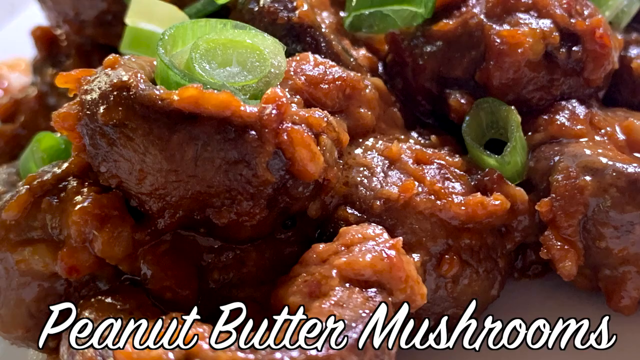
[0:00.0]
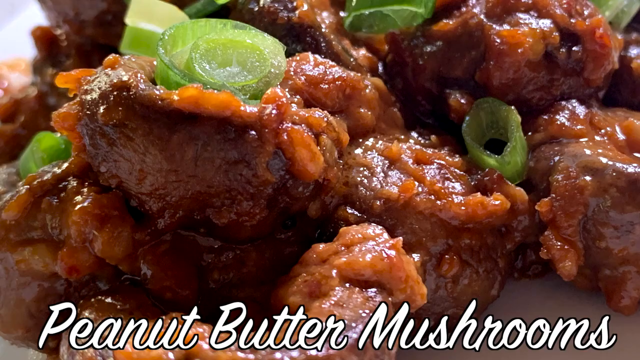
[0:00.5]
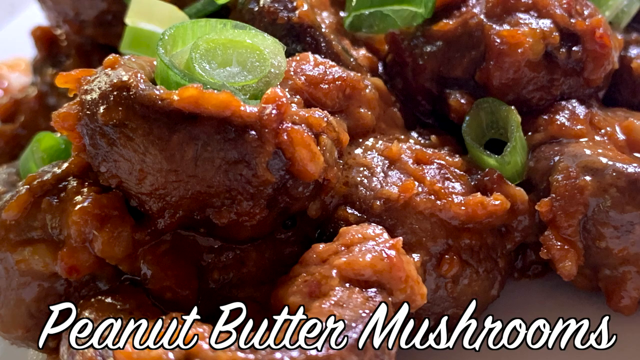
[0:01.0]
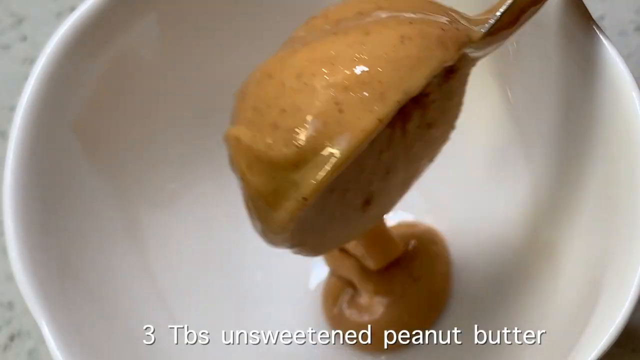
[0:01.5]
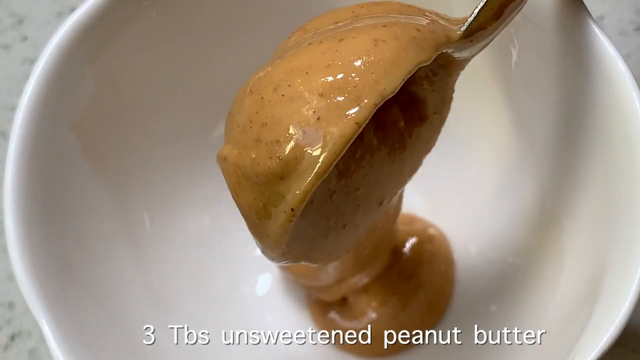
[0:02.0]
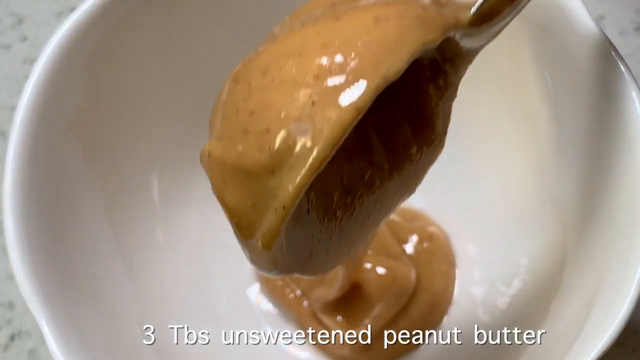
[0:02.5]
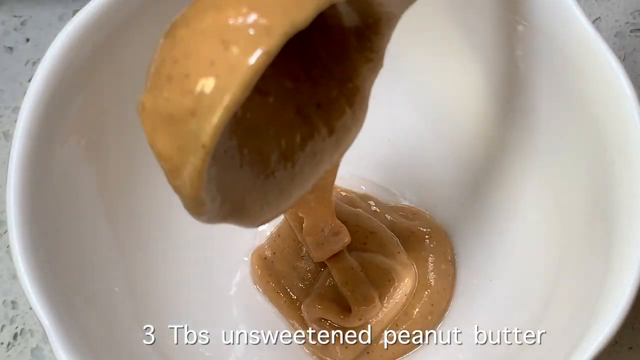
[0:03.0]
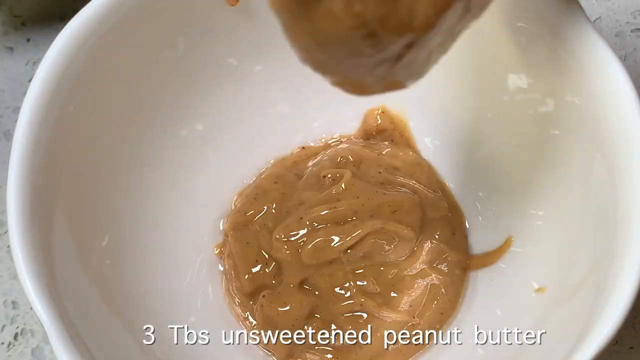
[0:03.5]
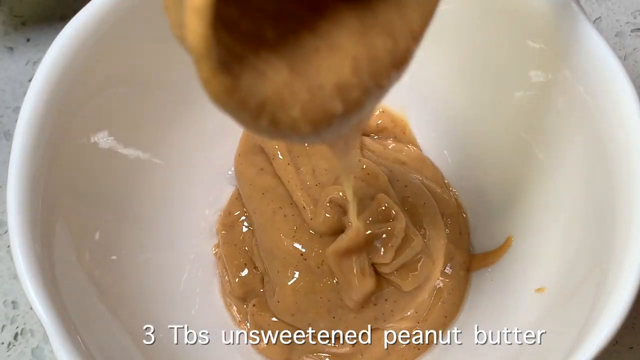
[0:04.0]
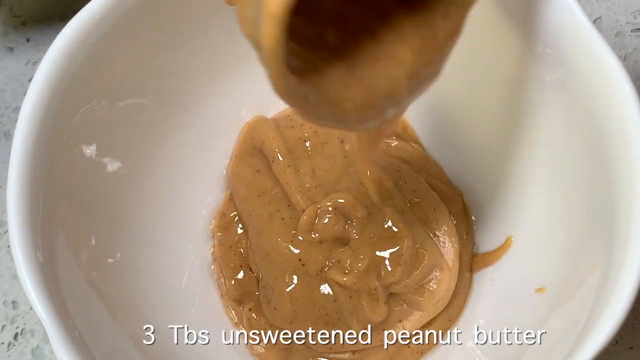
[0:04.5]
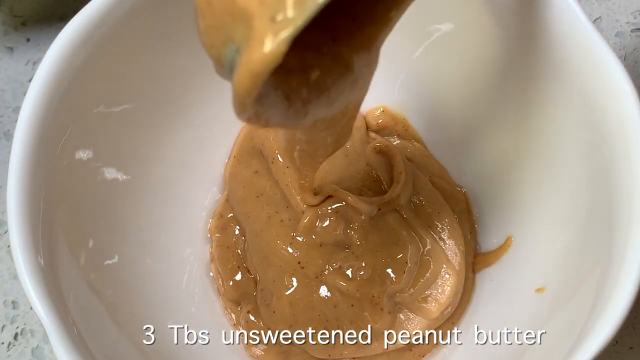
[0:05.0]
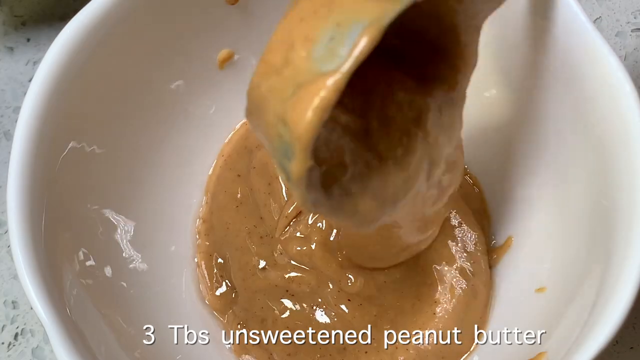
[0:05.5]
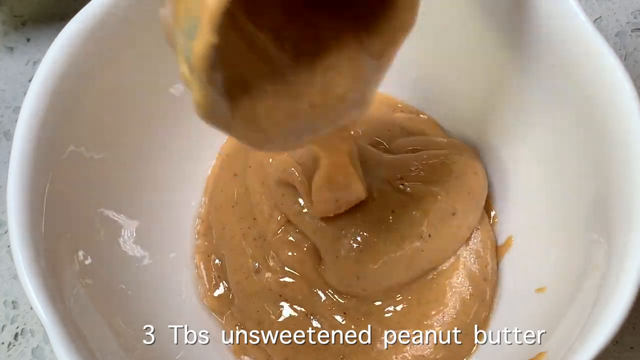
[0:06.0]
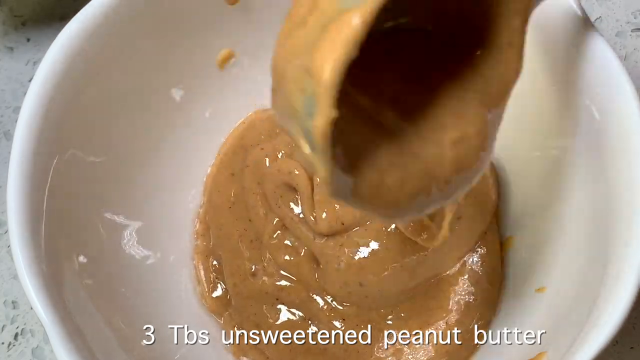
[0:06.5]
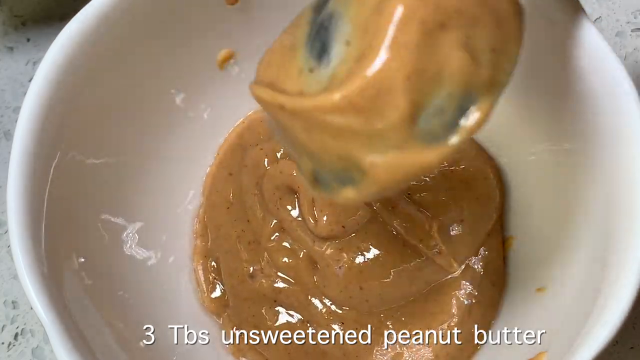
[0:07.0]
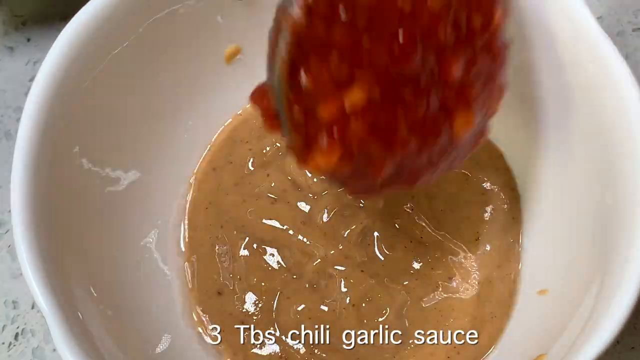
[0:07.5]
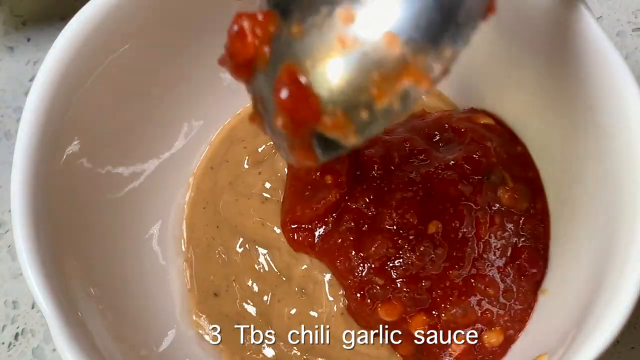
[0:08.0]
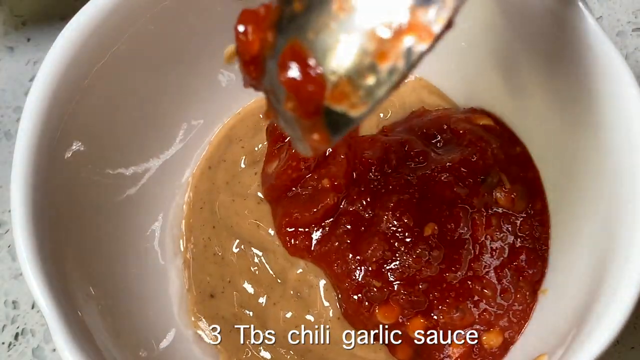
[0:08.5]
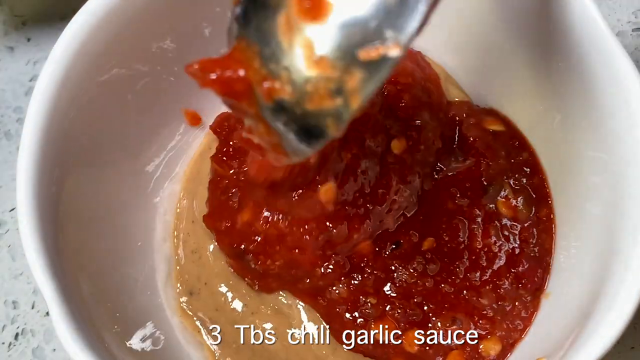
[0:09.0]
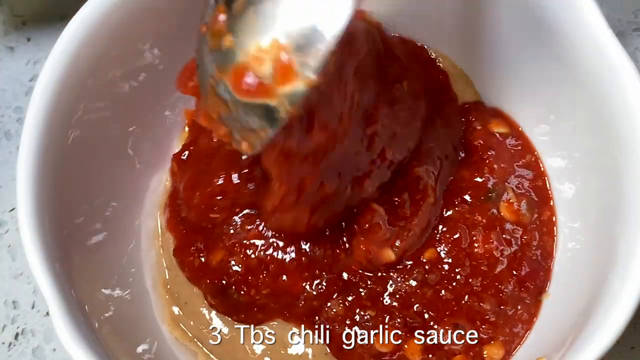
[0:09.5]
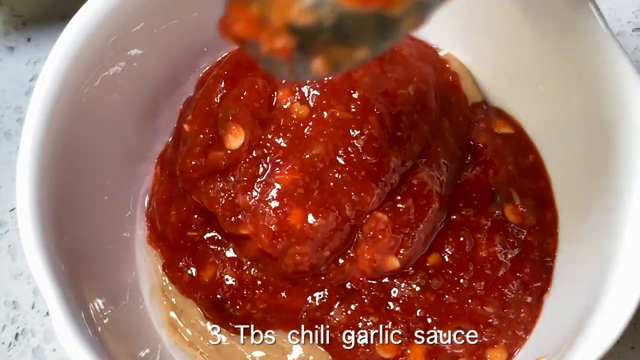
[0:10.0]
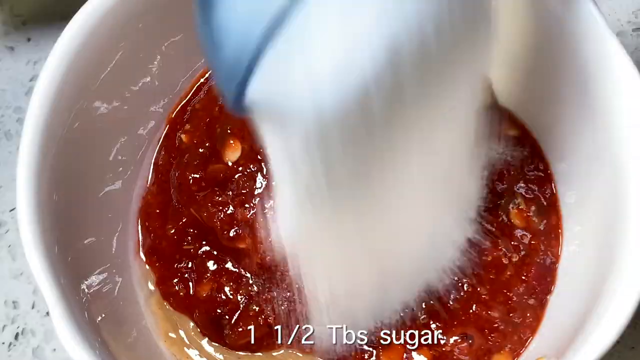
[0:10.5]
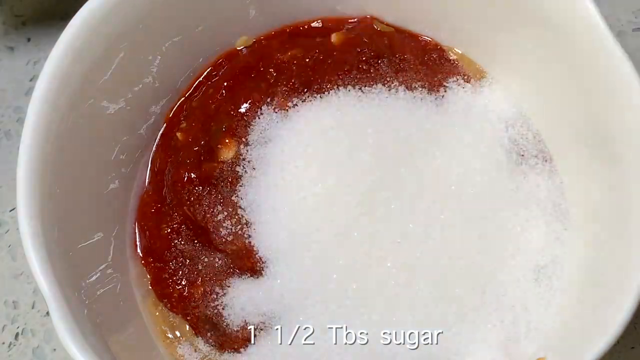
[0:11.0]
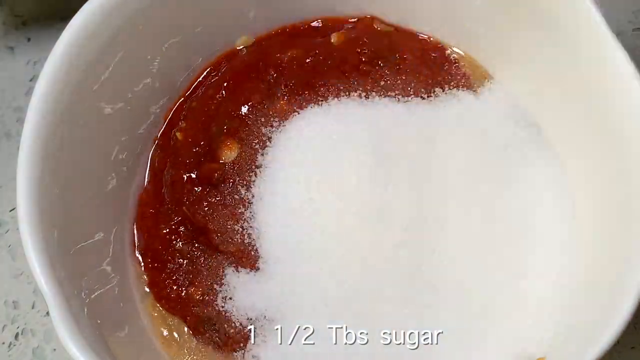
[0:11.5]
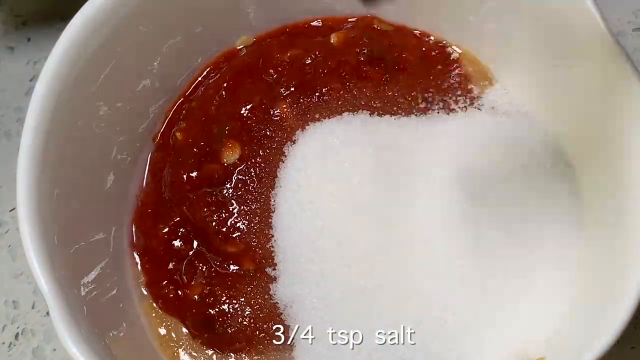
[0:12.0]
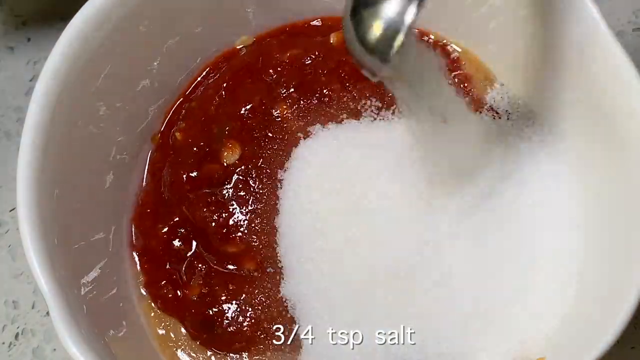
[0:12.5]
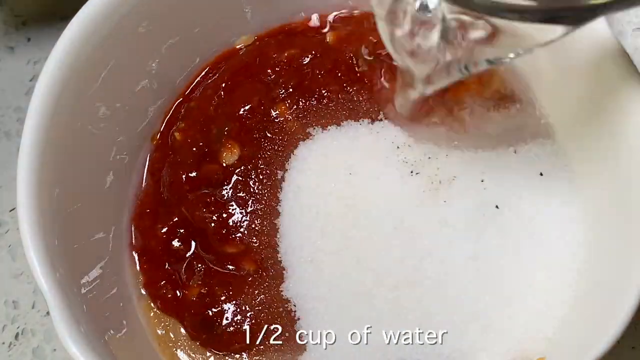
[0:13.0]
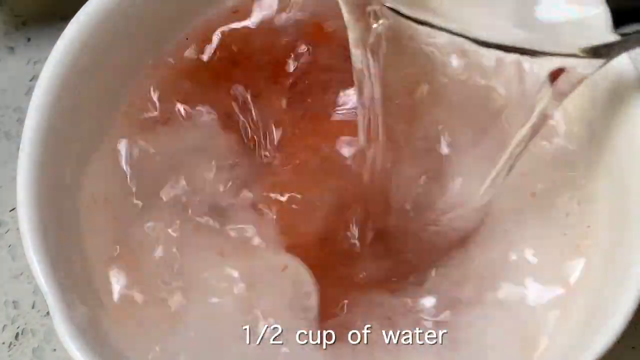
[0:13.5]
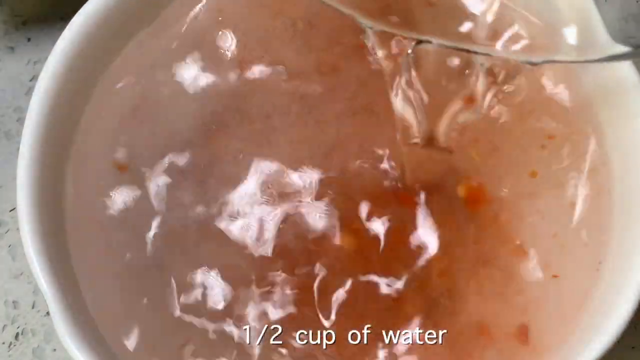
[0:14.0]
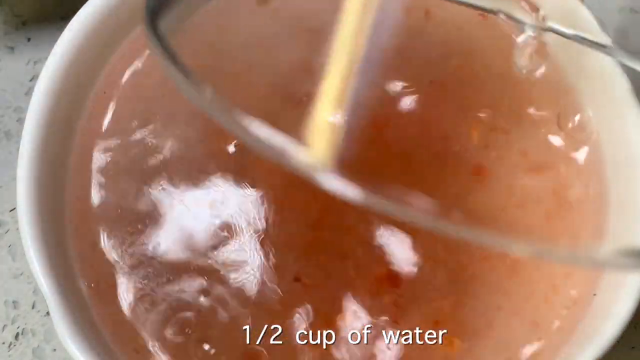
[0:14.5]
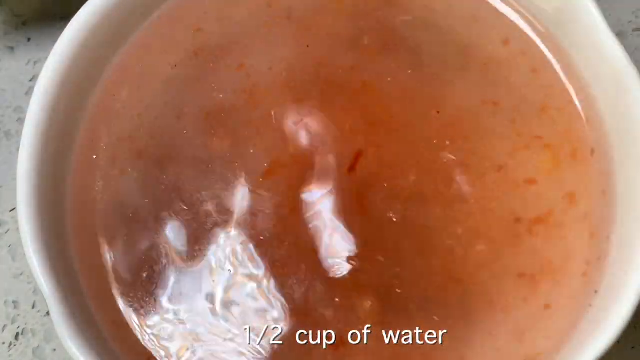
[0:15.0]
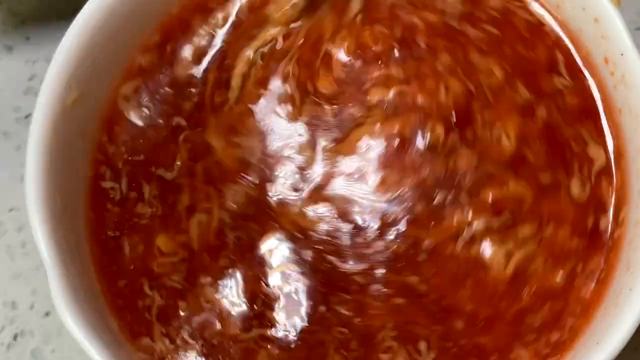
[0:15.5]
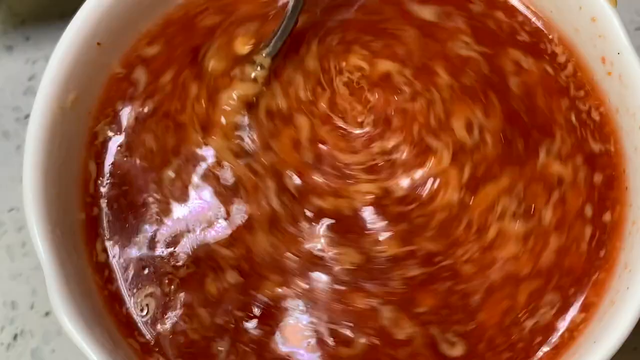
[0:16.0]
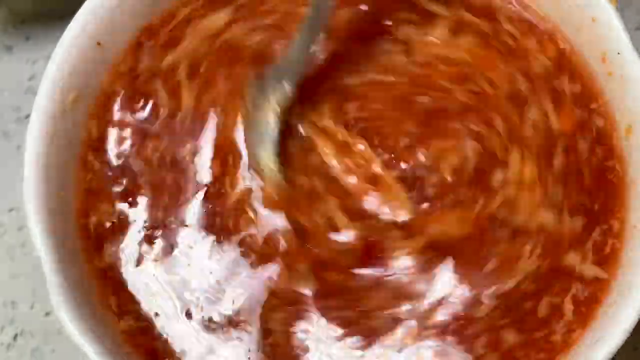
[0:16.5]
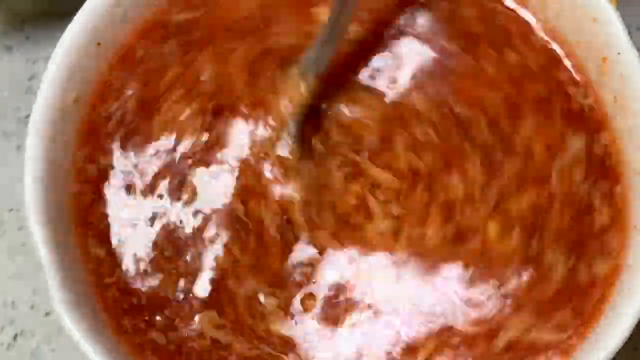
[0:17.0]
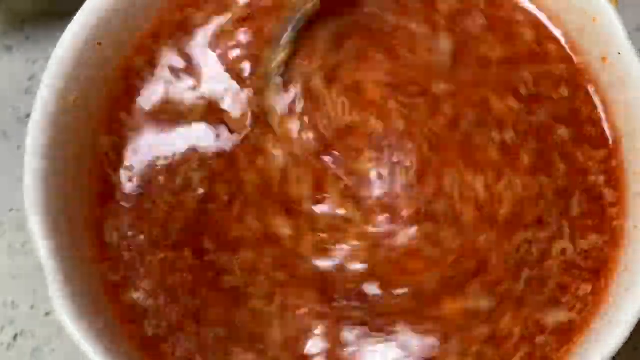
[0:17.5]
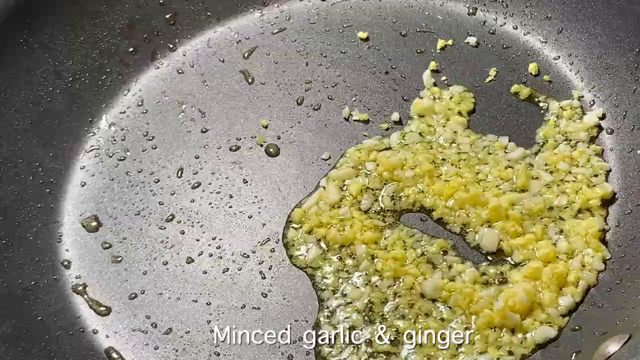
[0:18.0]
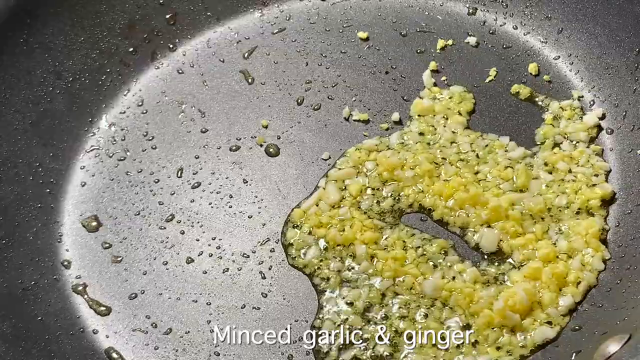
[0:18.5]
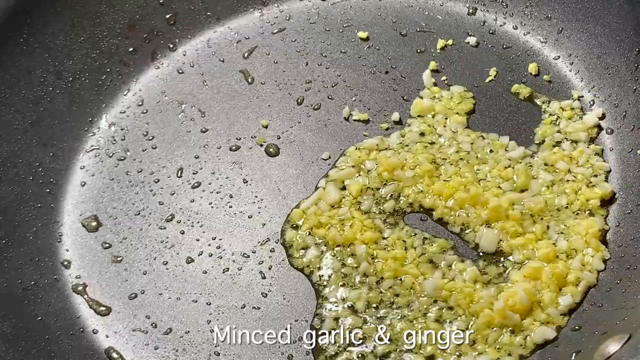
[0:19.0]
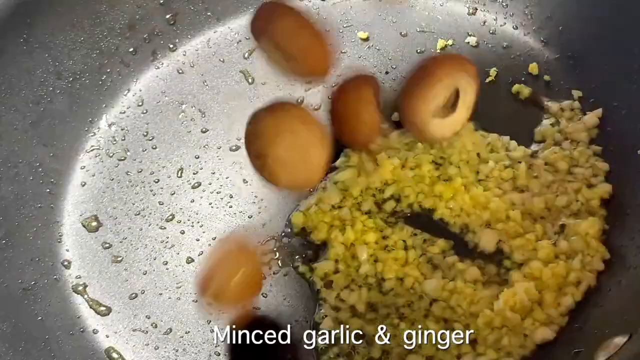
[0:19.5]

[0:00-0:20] The video opens with a close-up of what looks to be a finished dish. It is sort of a brown color, appears to have scallions on top, and kind of resembles chicken wings. Text at the bottom reads "peanut butter mushrooms." The scene then cuts to a close-up of a white bowl as a measuring spoon pours in an ingredient, with text at the bottom of the screen reading "three tablespoons of unsweetened peanut butter." Next, a spoon pours in a red liquid of some kind, and text at the bottom reads "two tablespoons of chili garlic sauce." Sugar is poured in with the text "a third of a cup," followed by one and a half tablespoons of sugar, three quarters of a tablespoon of salt and half a cup of water. A spoon mixes everything together very rapidly. The scene then cuts to a frying pan with minced garlic simmering, and what looks like mushrooms are dumped into it.